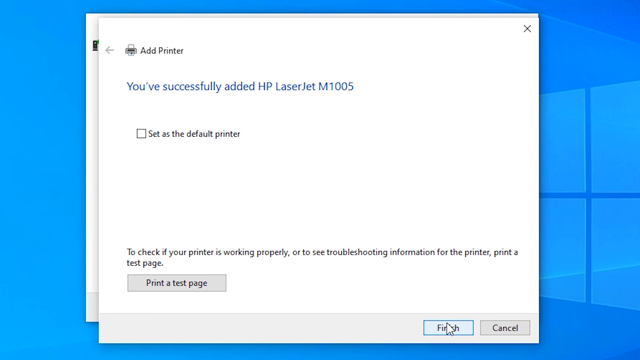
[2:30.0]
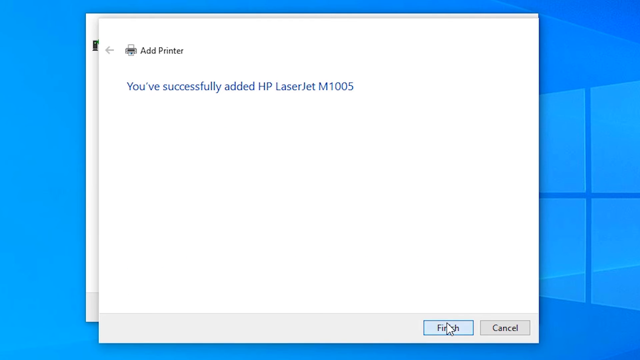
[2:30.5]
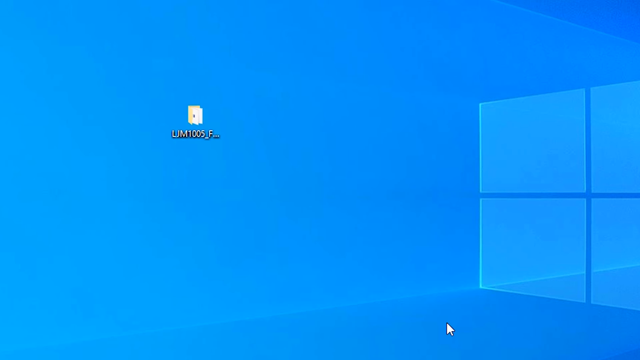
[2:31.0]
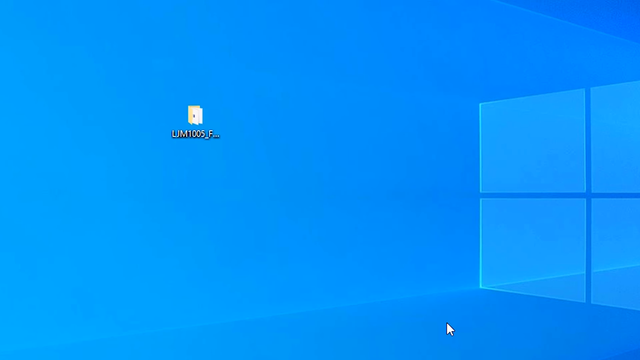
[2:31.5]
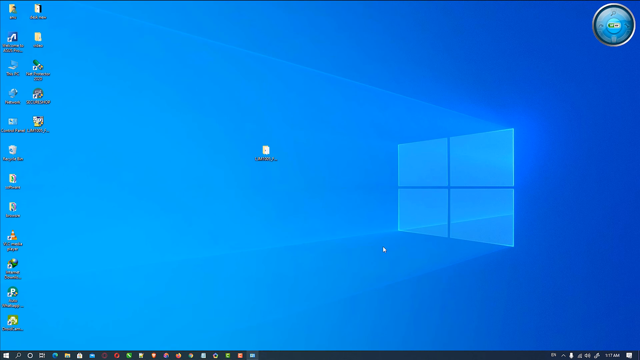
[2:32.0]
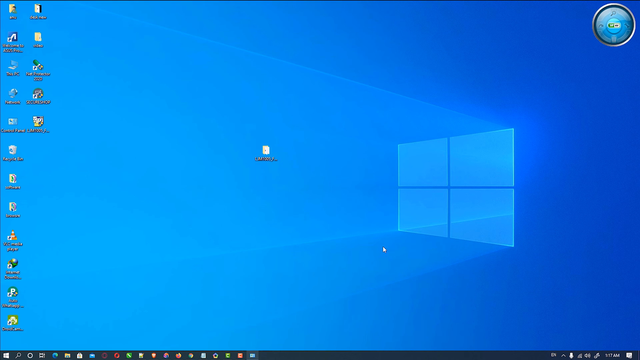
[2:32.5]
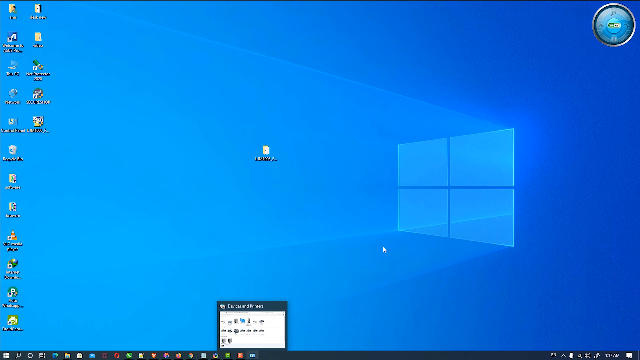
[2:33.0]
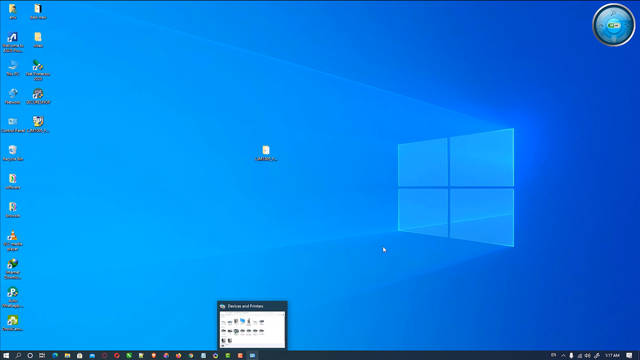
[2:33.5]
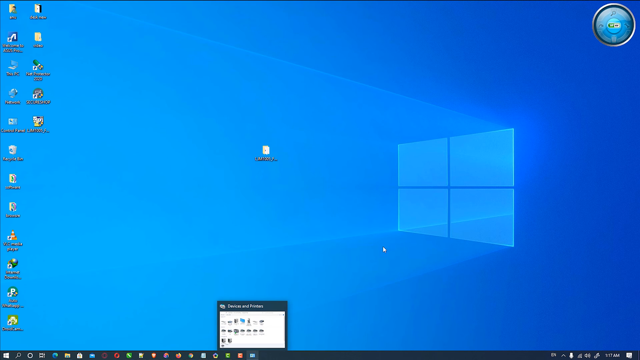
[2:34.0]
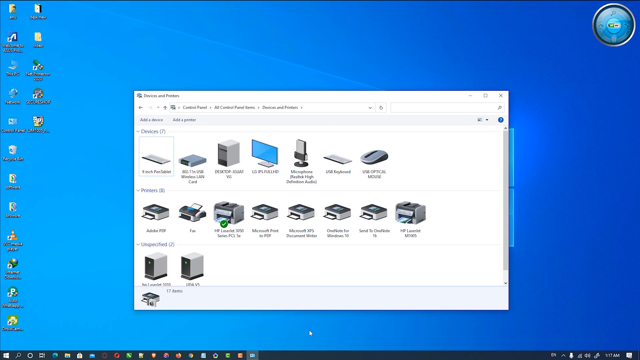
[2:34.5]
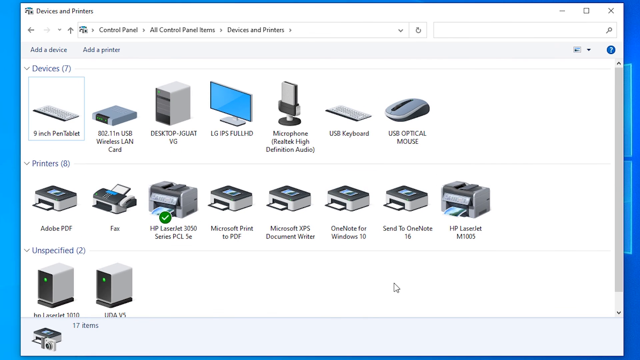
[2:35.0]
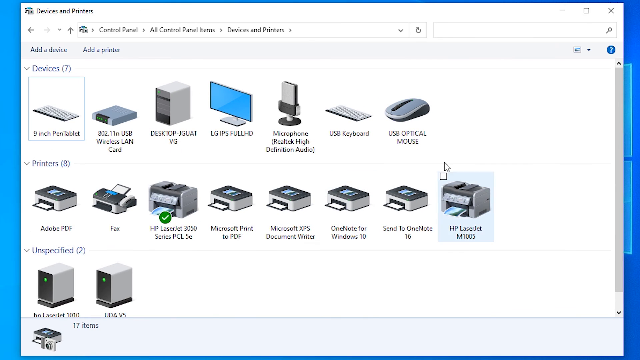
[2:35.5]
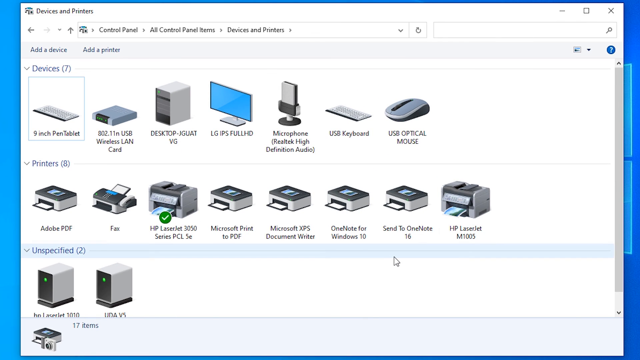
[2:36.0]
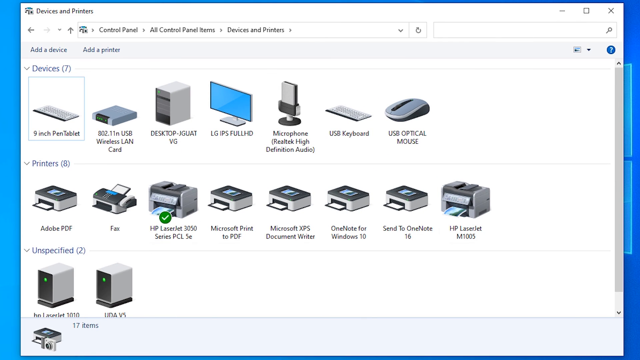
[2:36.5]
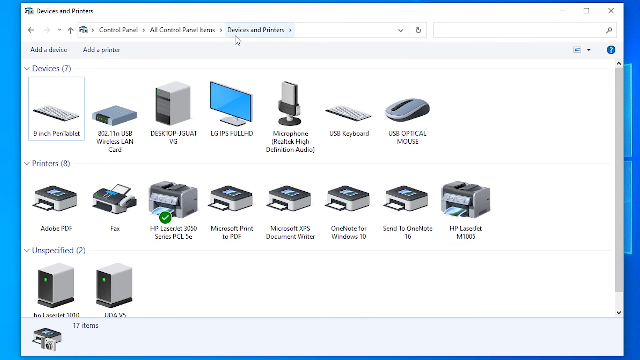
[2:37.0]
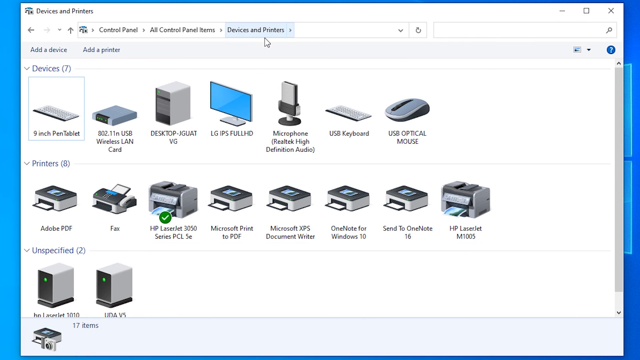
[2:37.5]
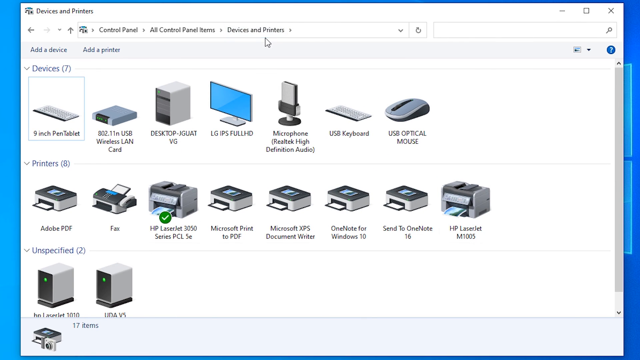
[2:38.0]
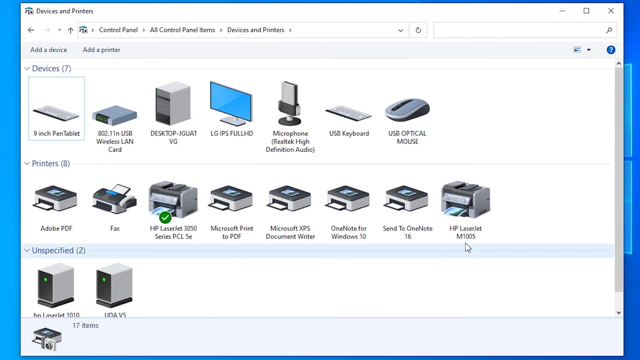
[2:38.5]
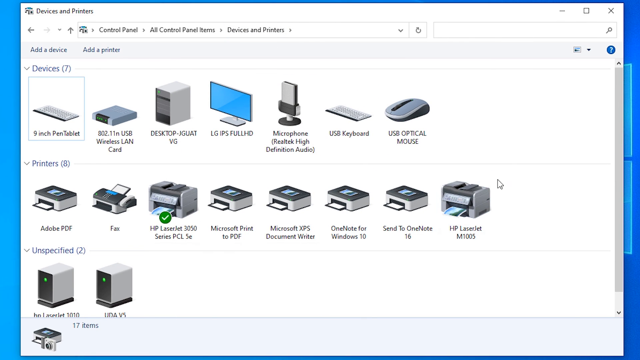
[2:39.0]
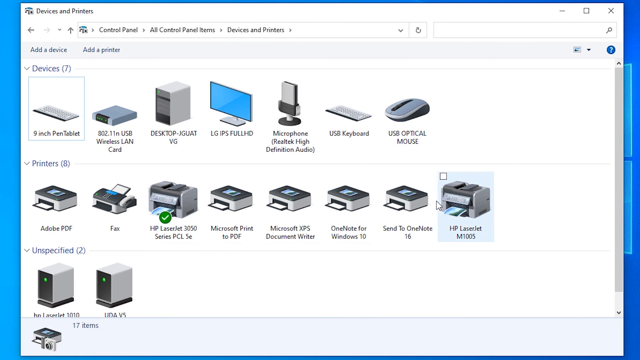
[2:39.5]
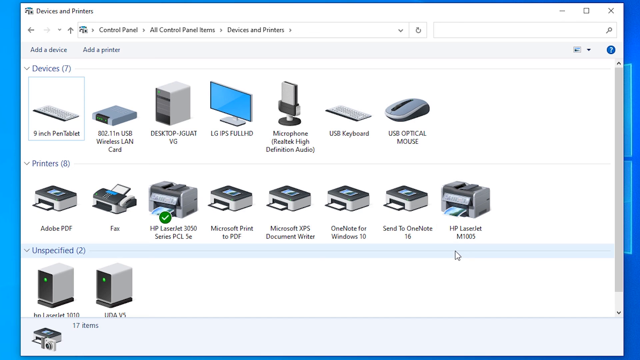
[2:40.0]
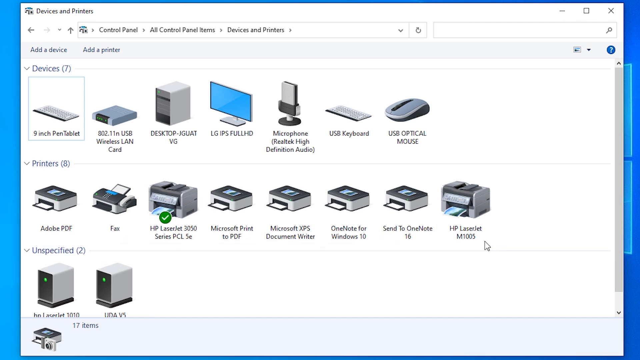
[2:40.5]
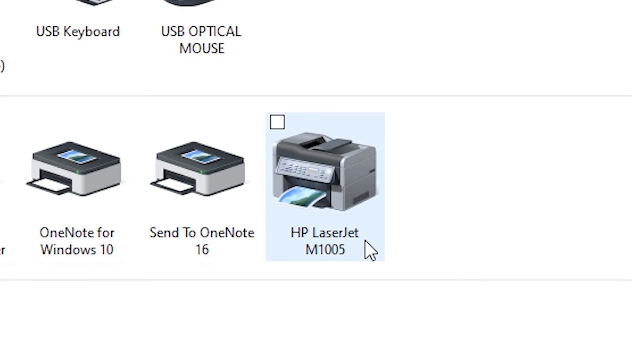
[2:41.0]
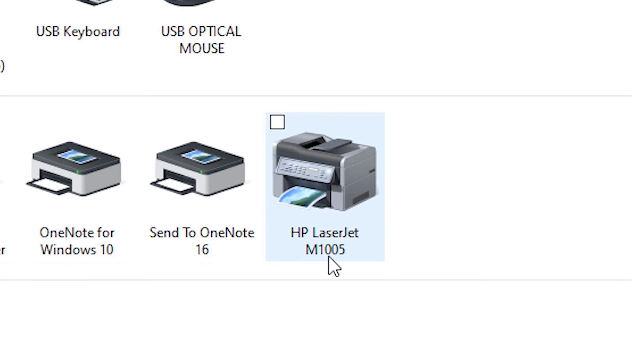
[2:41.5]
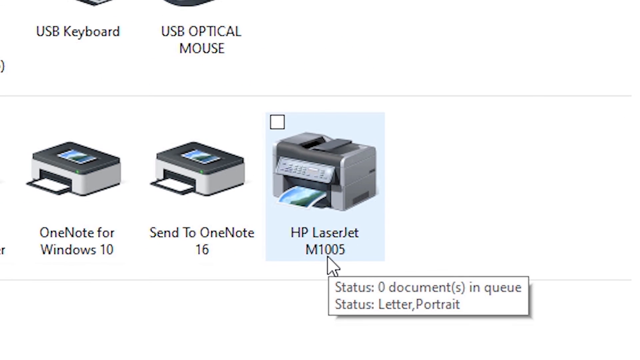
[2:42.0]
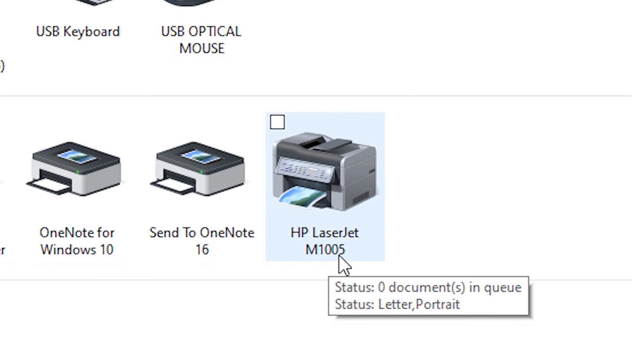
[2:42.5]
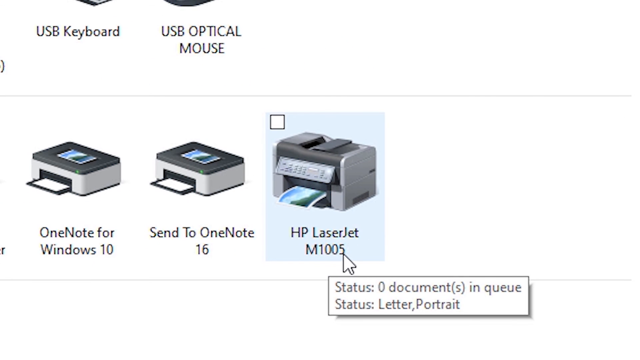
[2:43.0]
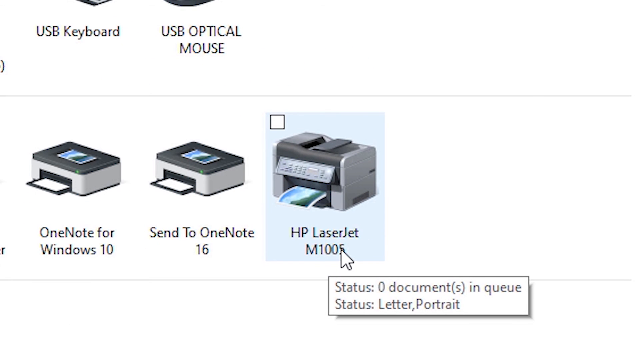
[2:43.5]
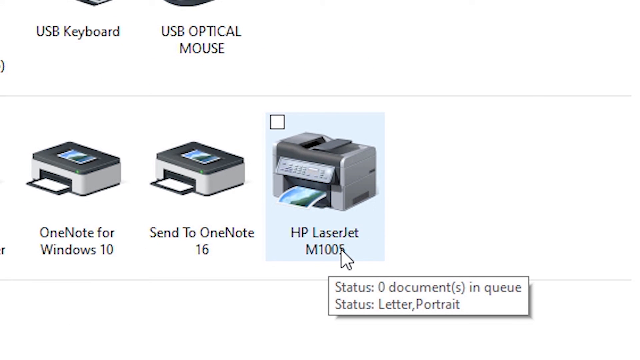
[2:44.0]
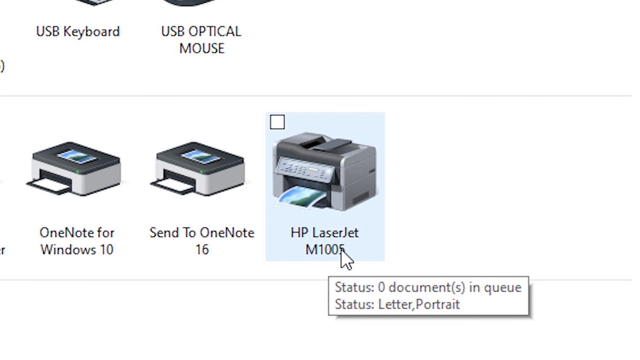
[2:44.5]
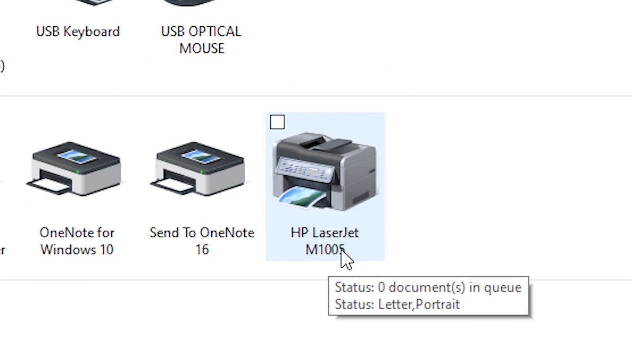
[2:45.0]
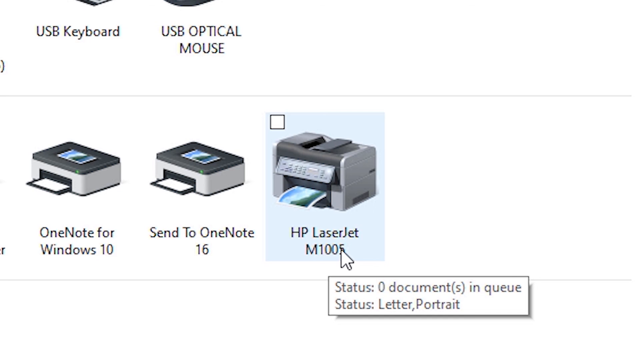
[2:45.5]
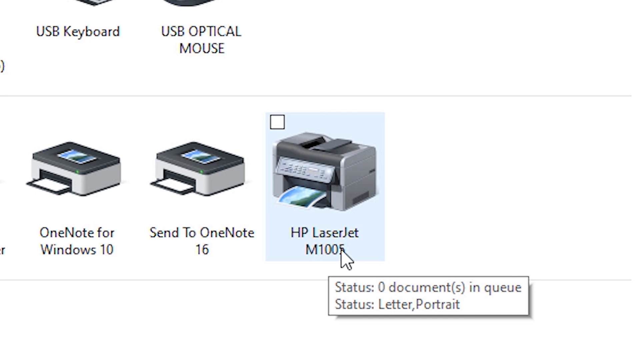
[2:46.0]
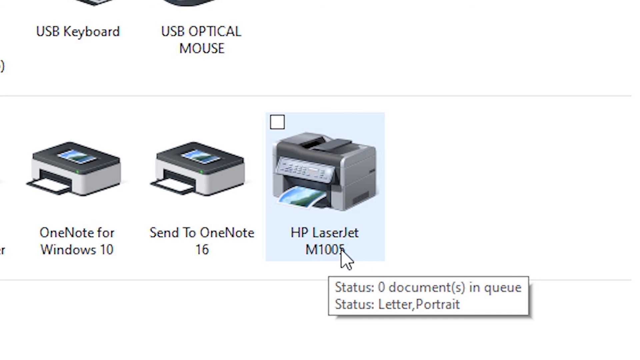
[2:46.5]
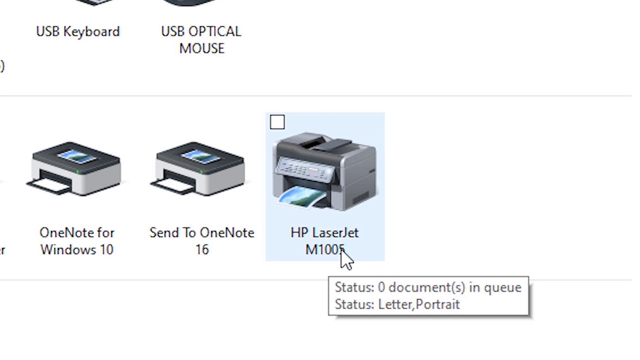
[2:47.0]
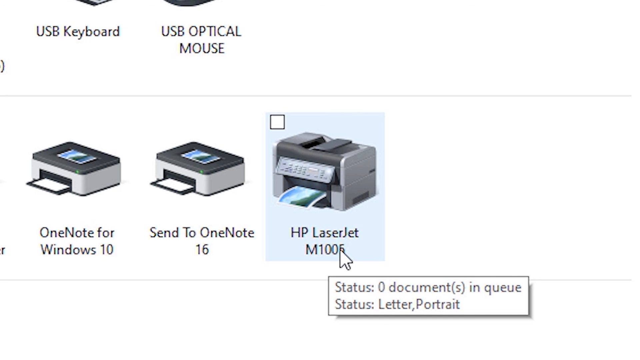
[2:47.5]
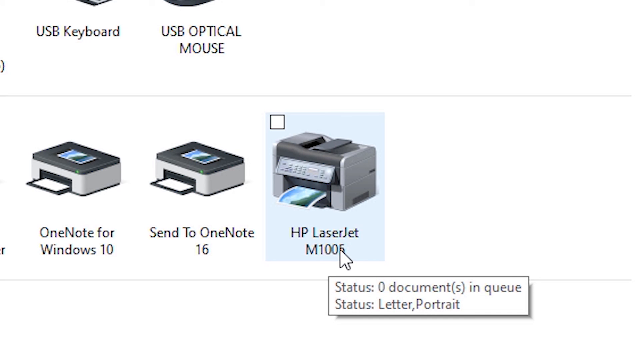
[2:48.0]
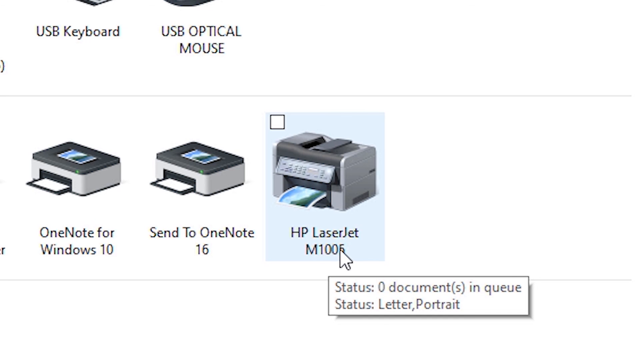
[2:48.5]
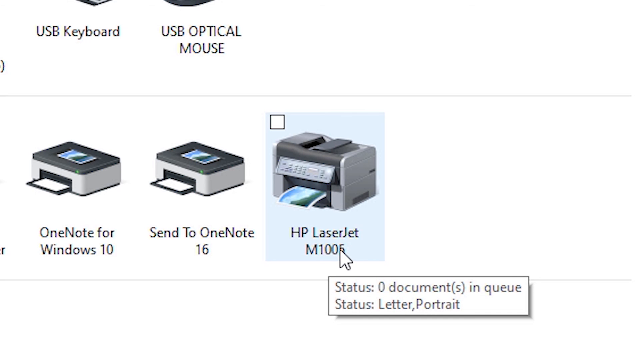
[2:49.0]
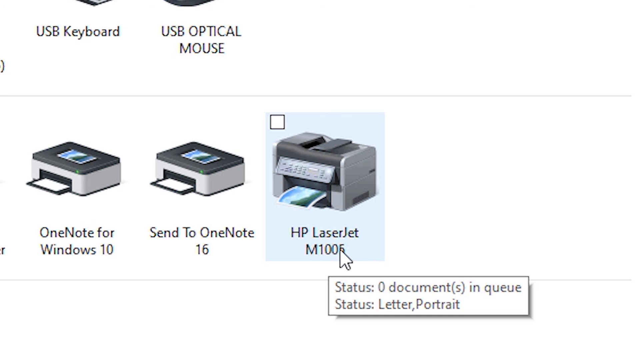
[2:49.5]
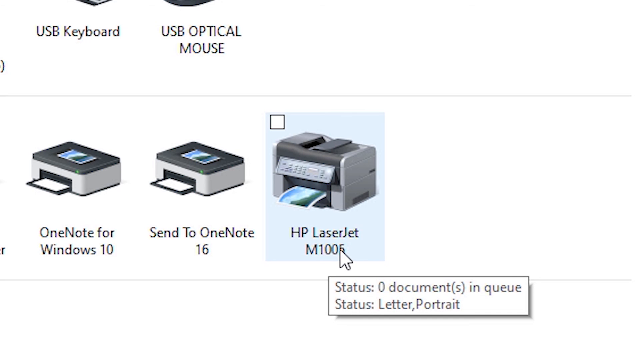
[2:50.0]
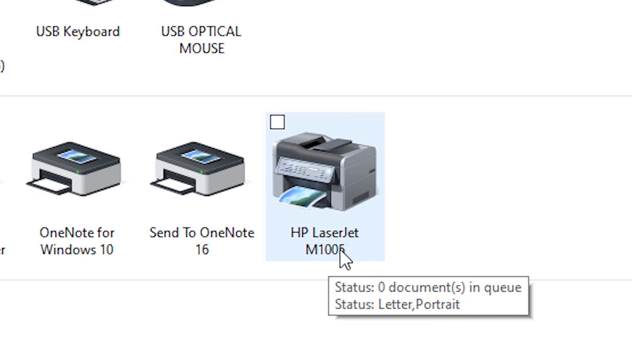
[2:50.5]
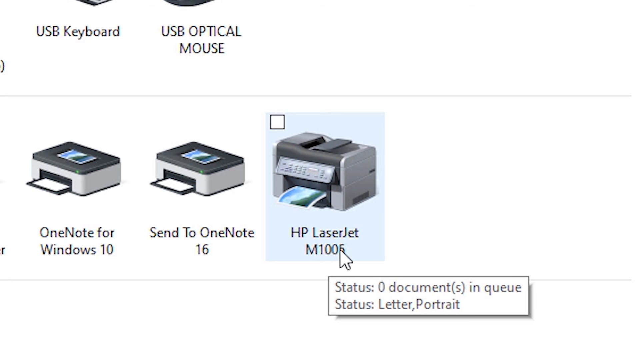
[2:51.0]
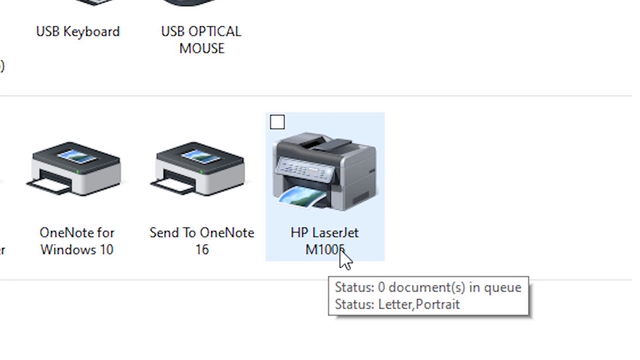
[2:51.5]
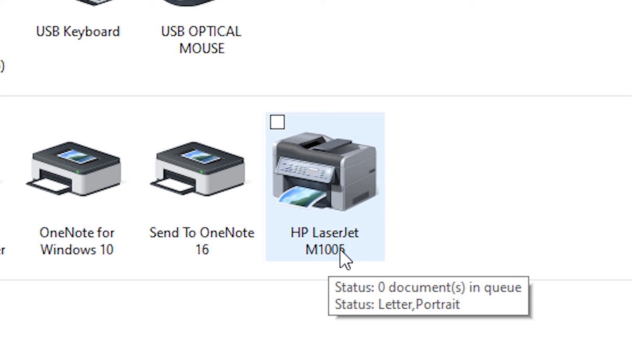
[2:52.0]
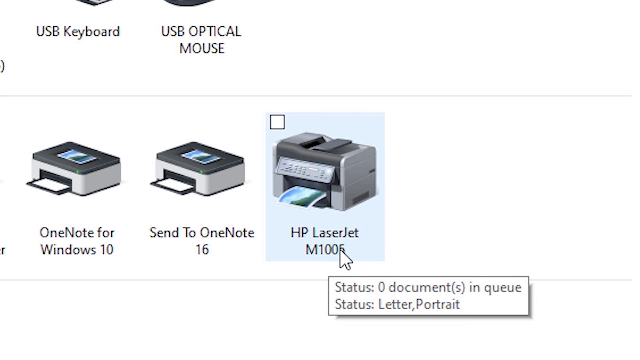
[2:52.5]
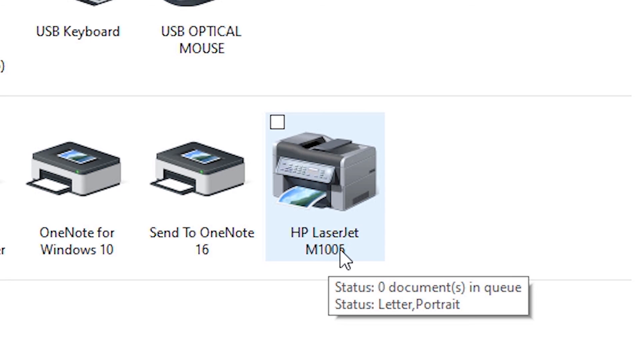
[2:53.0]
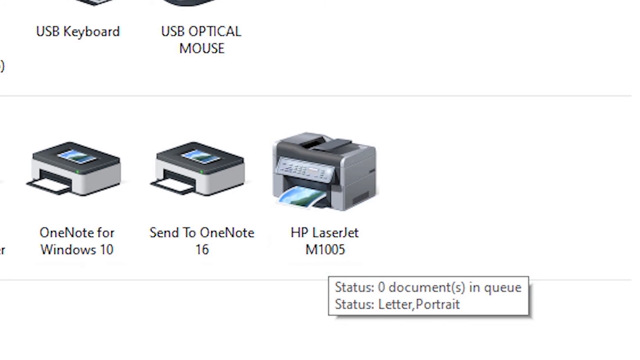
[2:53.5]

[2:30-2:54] The video, a little wider than it is tall, shows a person's desktop with a light blue background, mostly overlaid by a window. The window says "Devices and Printers" in its upper left and shows all of the devices and printers. The cursor goes to the HP LaserJet M1005, circles it counterclockwise, and then rests on the 5 at the very bottom for some time before zooming off the left side of the screen. To the left of the HP LaserJet is another printer icon labeled "Send to OneNote 16". To the left of that is another small printer icon, dark gray on top and lighter gray on the bottom with a printer tray going diagonally left, labeled "OneNote for Windows 10". Above these are two more icons: the second from the left says "USB Optical Mouse", though its picture cannot be seen, and the one in the upper left corner says "USB Keyboard".